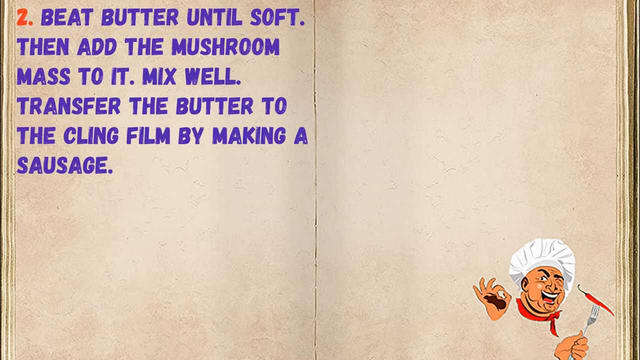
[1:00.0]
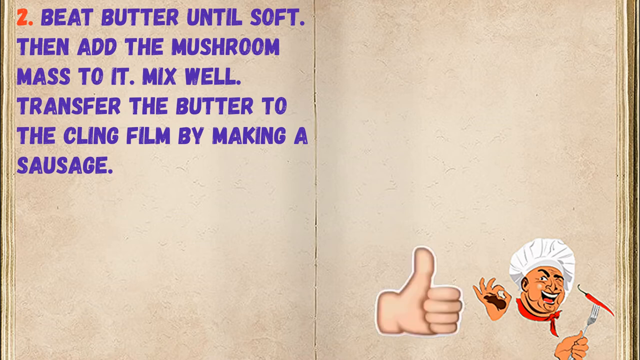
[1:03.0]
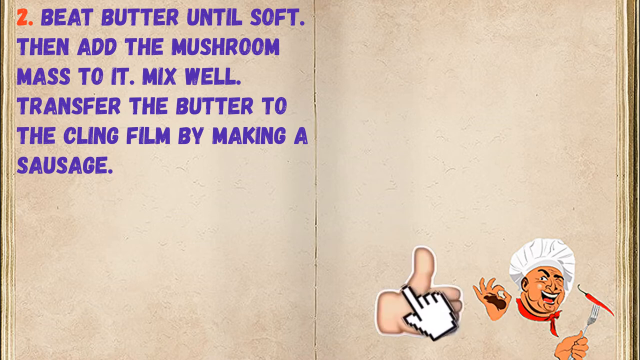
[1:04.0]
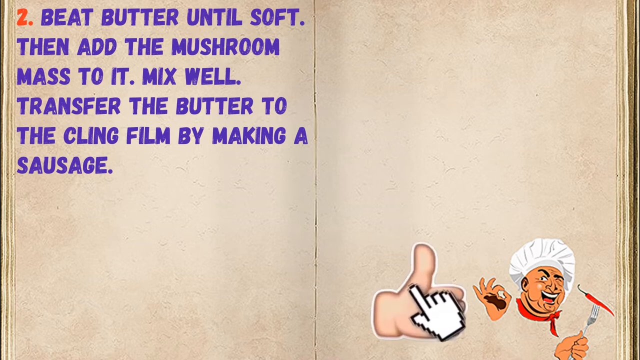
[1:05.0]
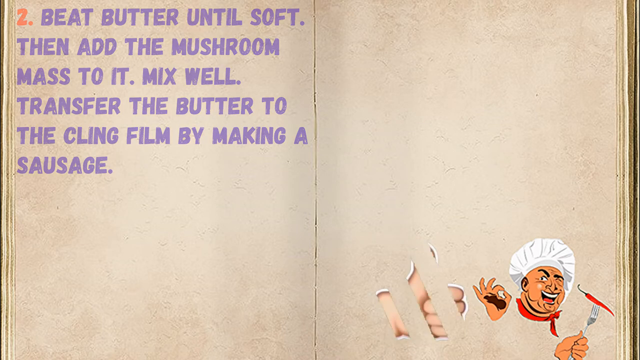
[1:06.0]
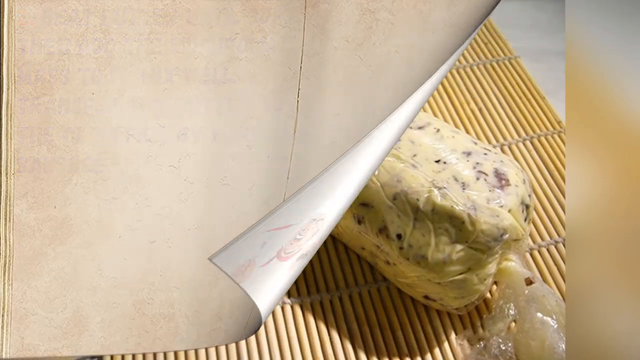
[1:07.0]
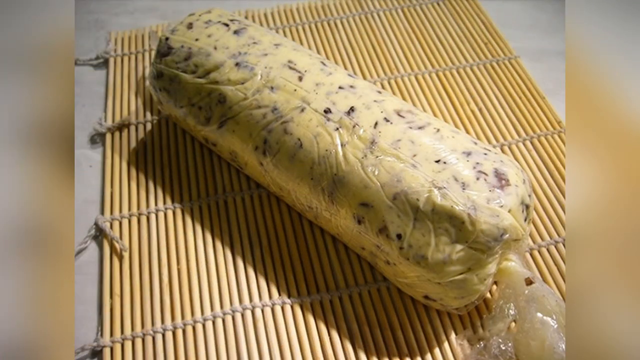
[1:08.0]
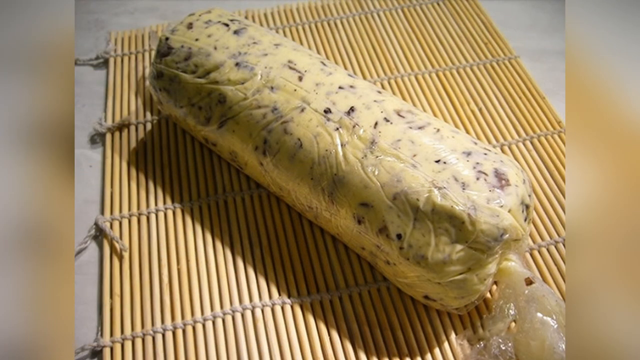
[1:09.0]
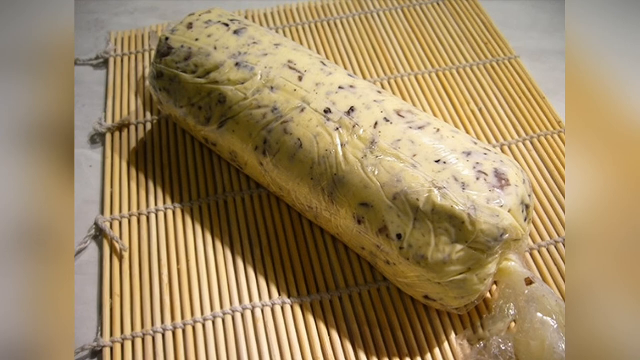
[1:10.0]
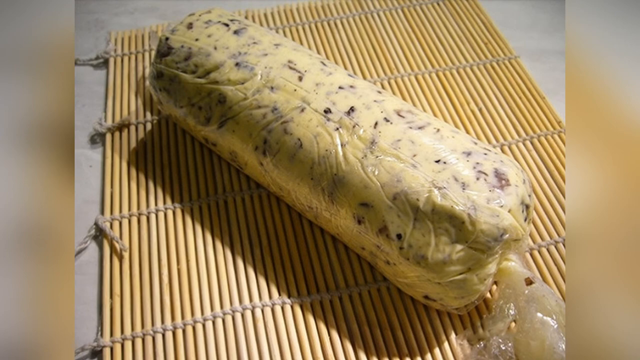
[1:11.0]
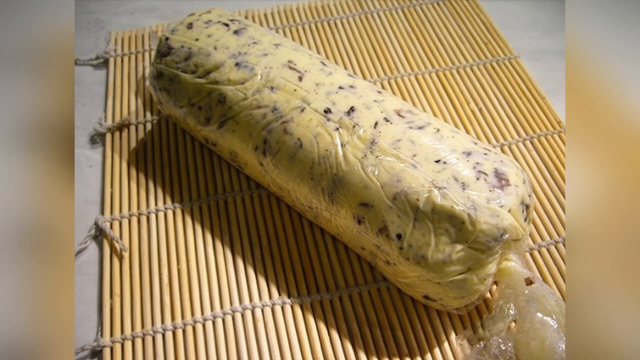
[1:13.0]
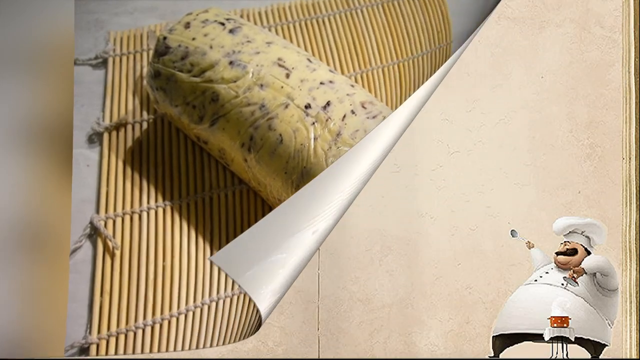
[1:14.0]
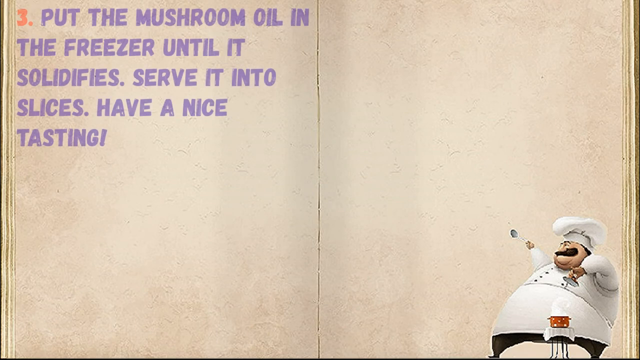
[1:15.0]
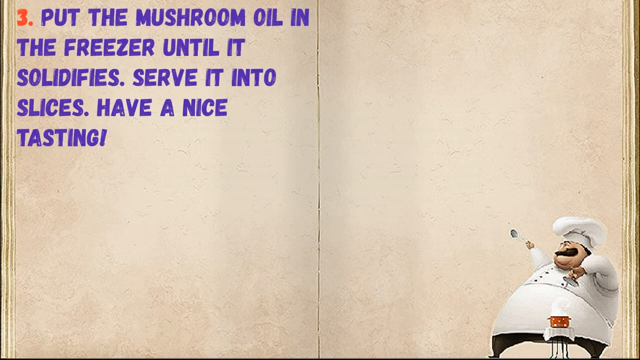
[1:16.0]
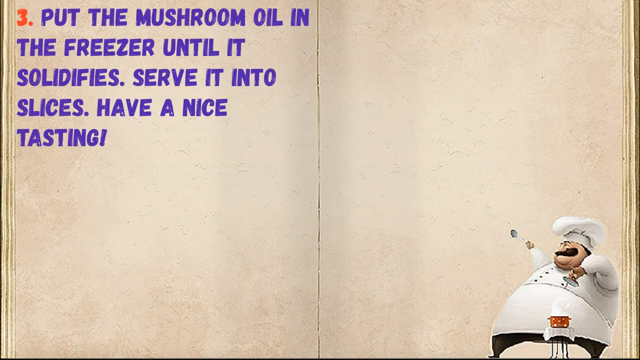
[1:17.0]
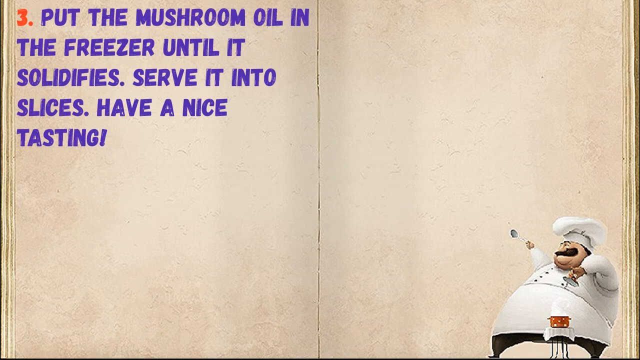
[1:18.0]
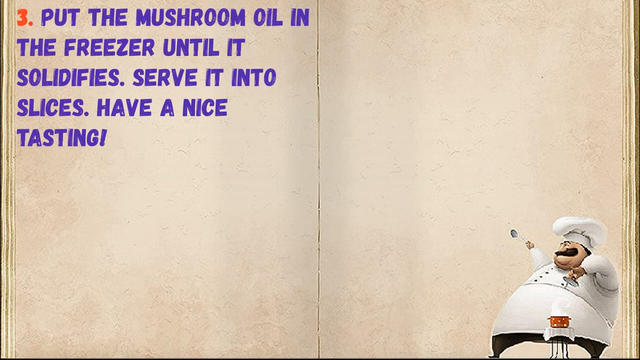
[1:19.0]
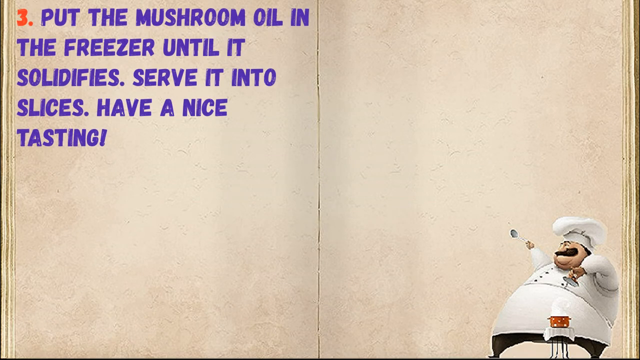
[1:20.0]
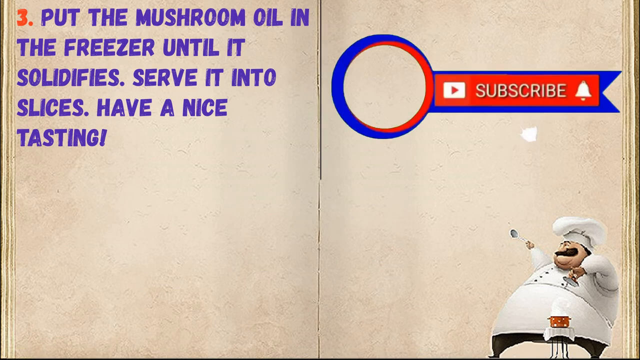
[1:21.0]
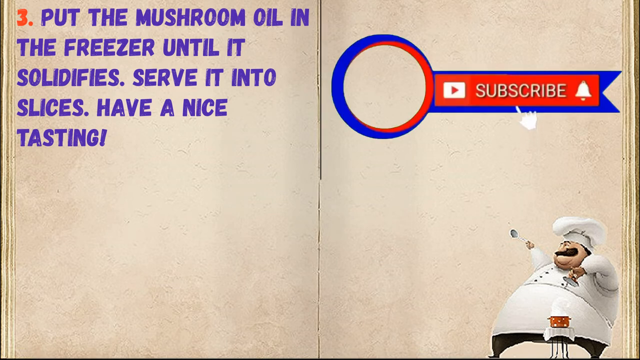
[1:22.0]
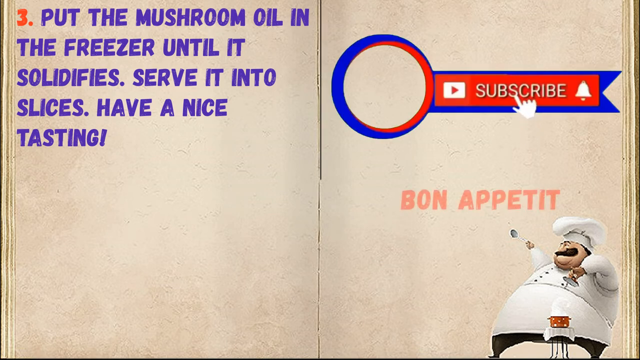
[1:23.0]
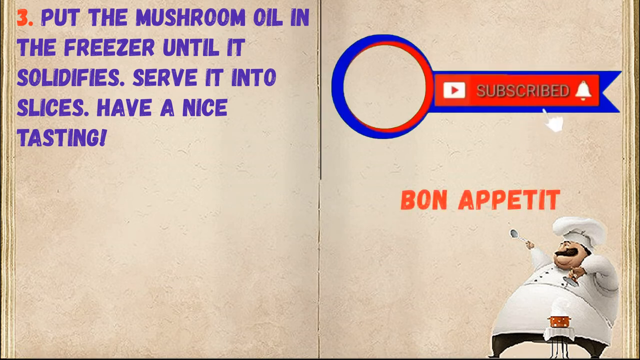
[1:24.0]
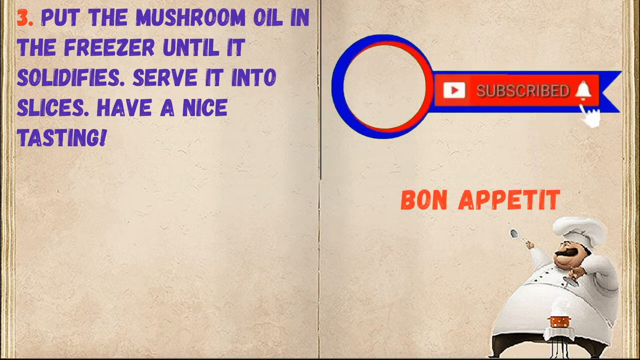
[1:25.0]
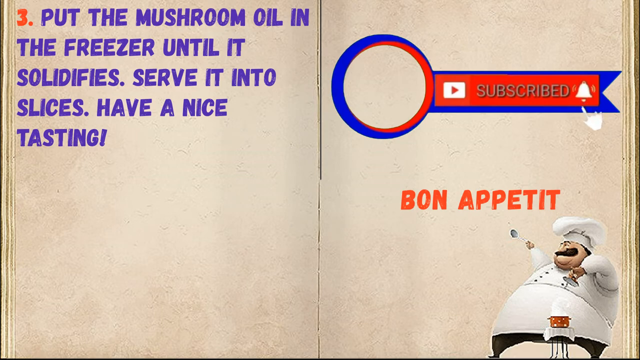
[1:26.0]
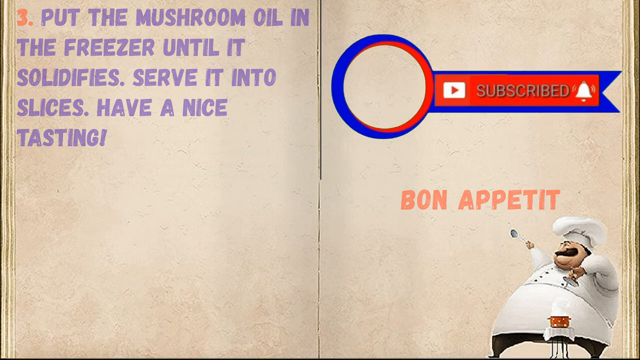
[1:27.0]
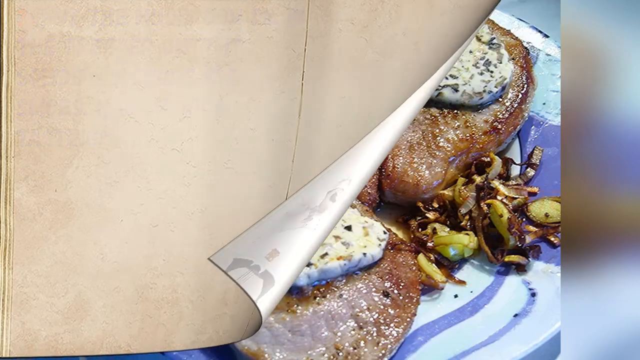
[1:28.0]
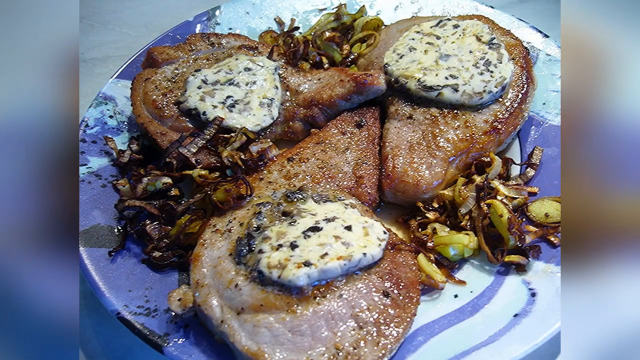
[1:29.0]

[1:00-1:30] A book-style graphic shows text on the left side saying to beat butter until soft, then add the mushroom mass to it, mix well, and transfer the butter to the cling film by making a sausage. In the bottom right is a picture of a chef wearing a white chef hat and holding a fork with a pepper on it. A thumbs-up like button appears. The scene then transitions to a large roll of something unclear, possibly butter around something; it is kind of yellowish with other little bits mixed in. The scene changes again to text reading "3. Put the mushroom oil in the freezer until it solidifies, serve it into slices, have a nice tasting." Another YouTube subscribe button appears on the right side, along with the text "bon appetit."